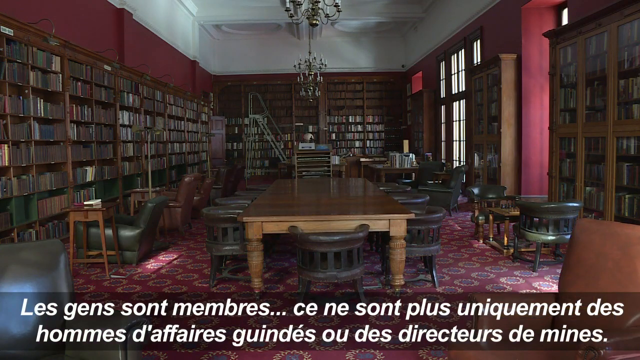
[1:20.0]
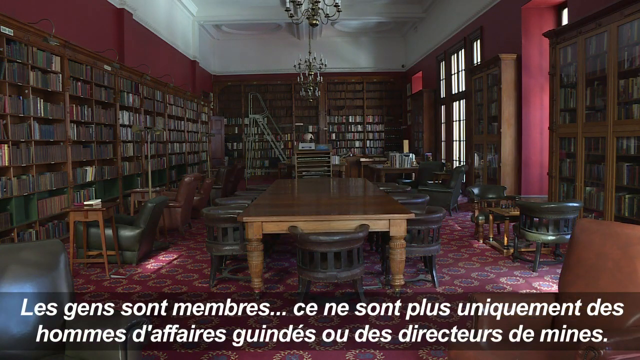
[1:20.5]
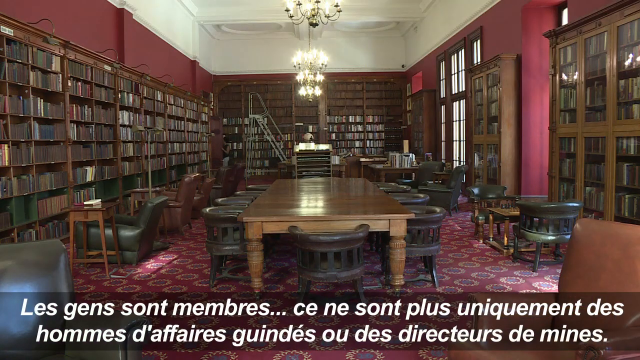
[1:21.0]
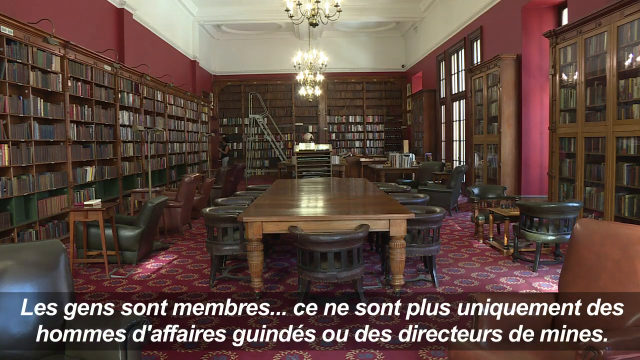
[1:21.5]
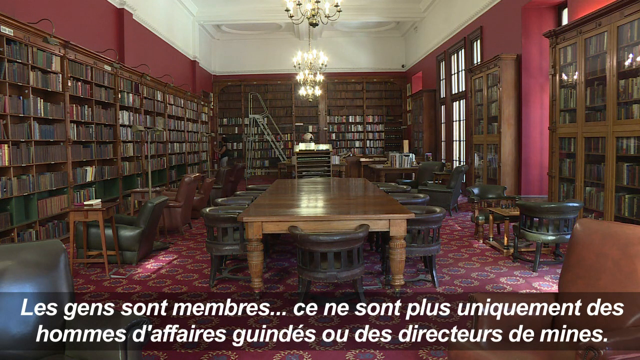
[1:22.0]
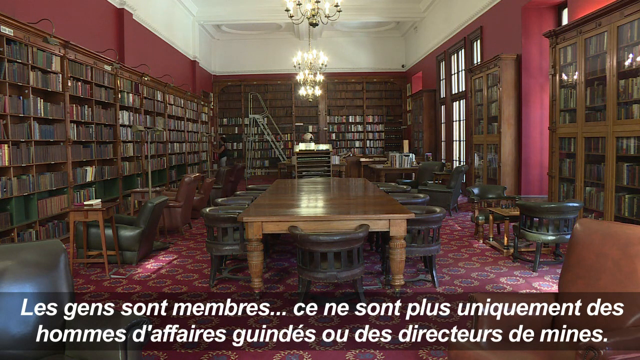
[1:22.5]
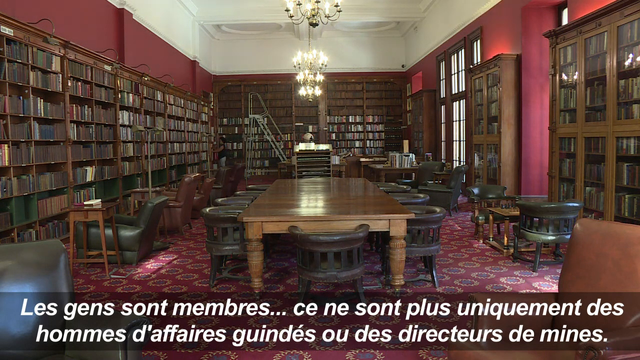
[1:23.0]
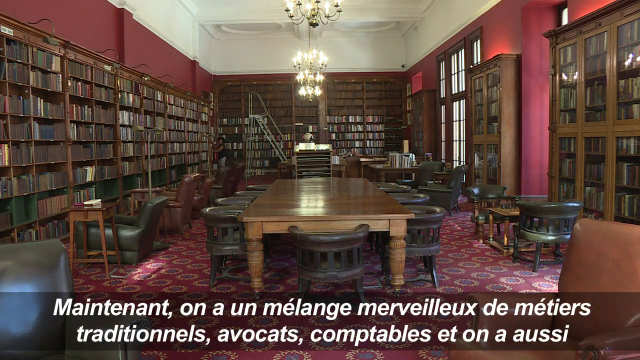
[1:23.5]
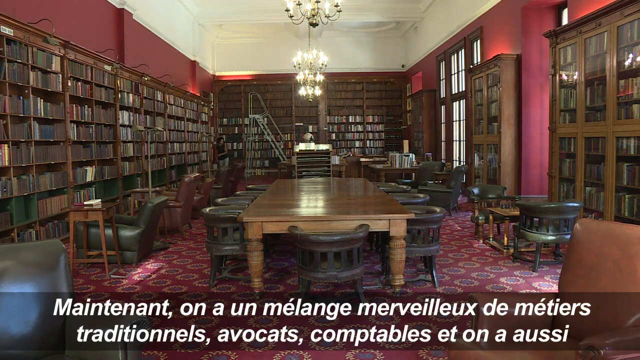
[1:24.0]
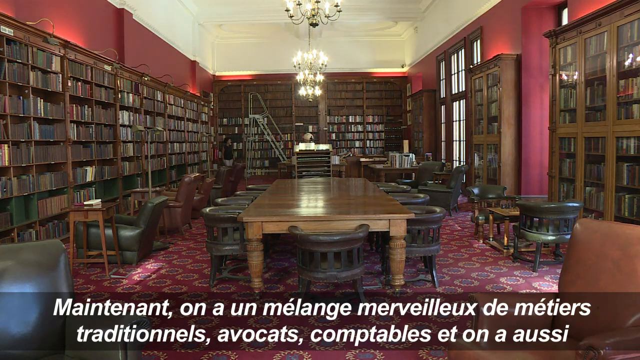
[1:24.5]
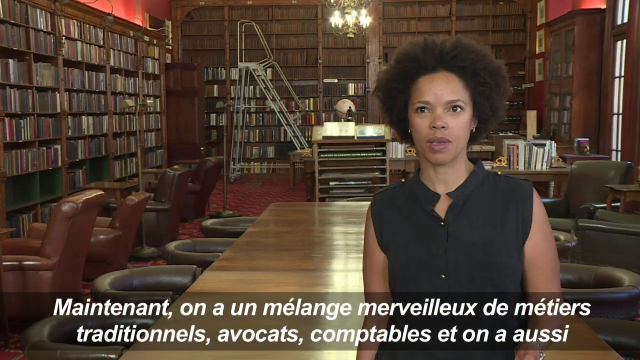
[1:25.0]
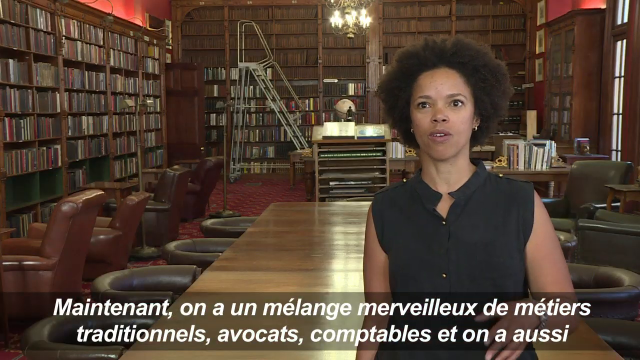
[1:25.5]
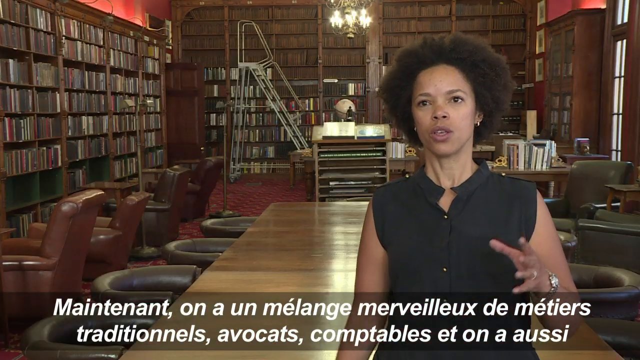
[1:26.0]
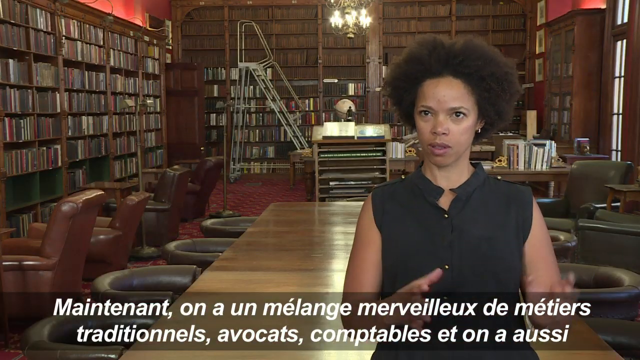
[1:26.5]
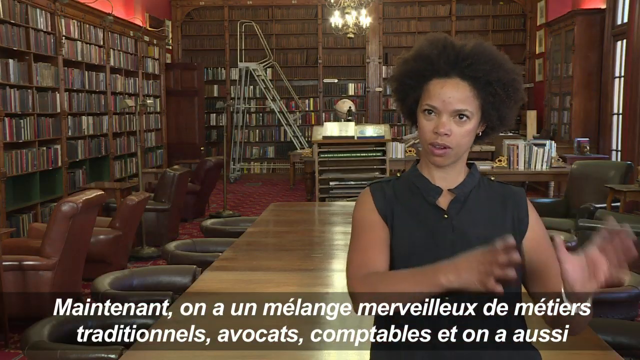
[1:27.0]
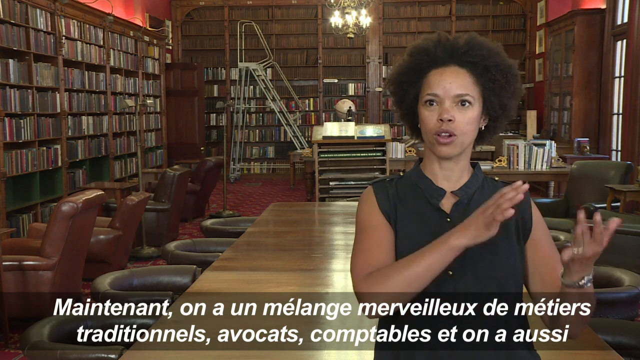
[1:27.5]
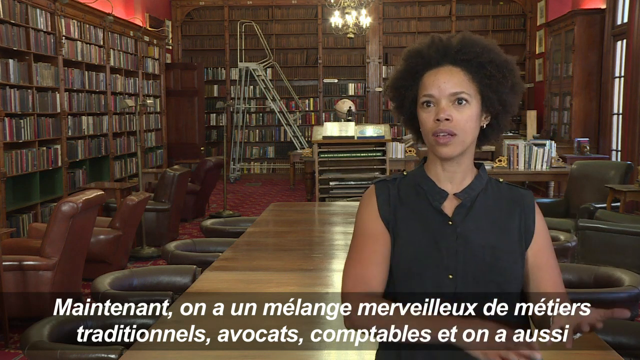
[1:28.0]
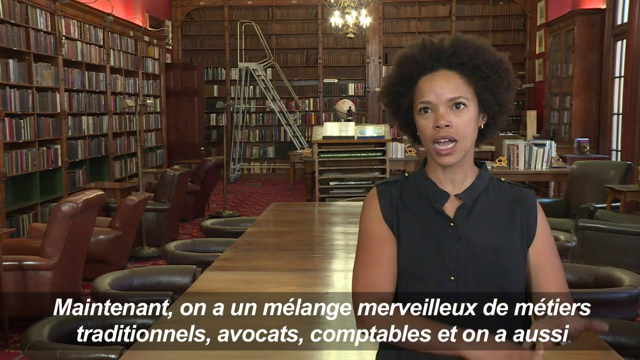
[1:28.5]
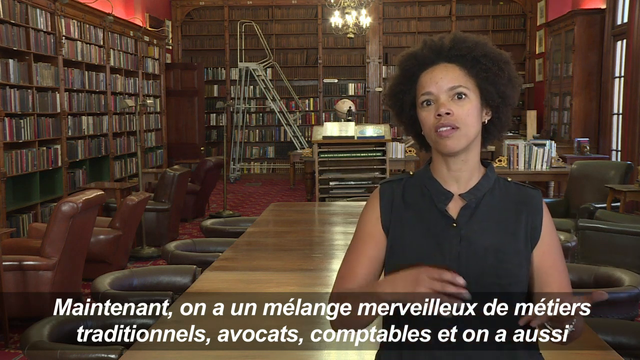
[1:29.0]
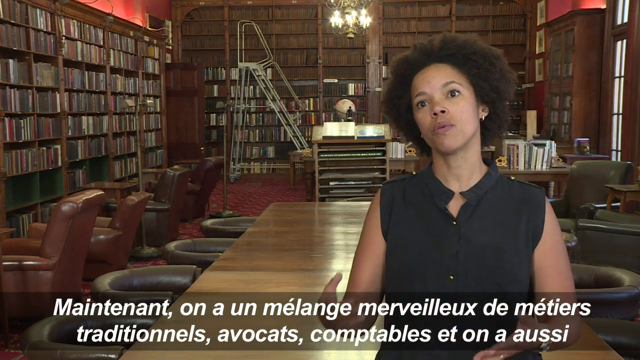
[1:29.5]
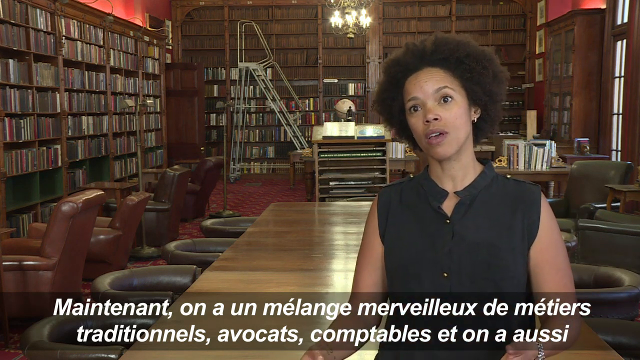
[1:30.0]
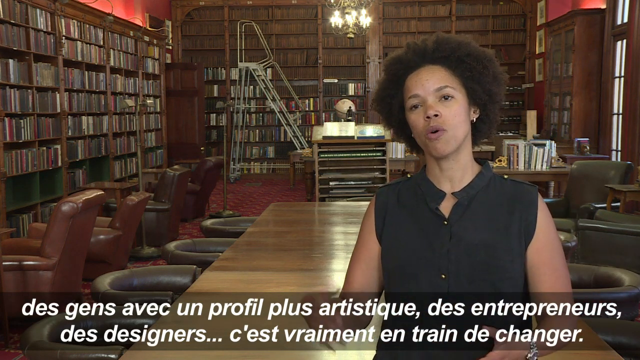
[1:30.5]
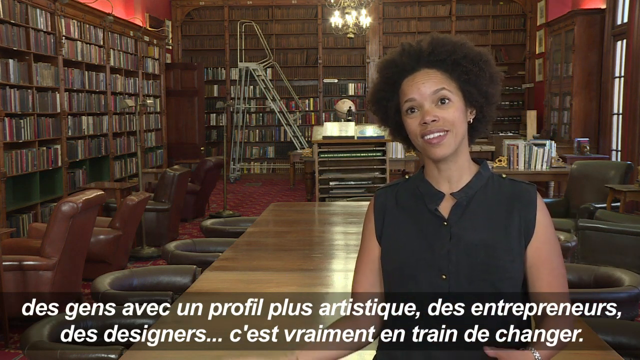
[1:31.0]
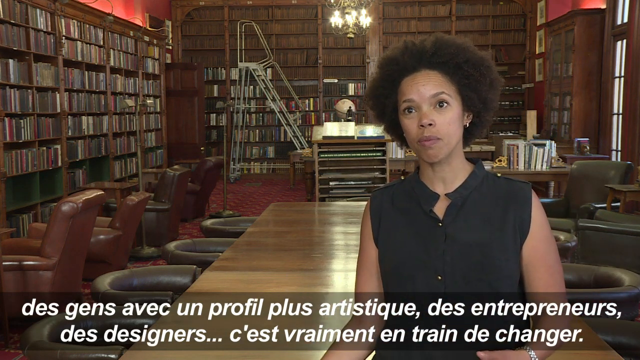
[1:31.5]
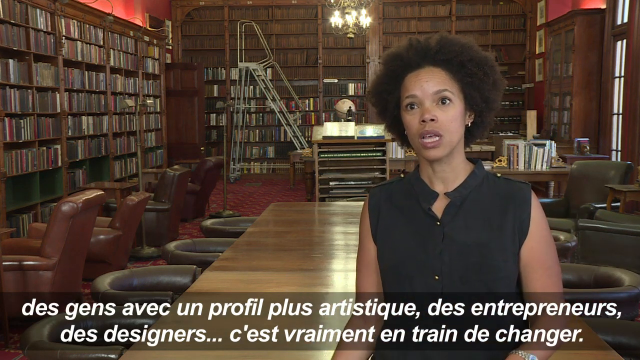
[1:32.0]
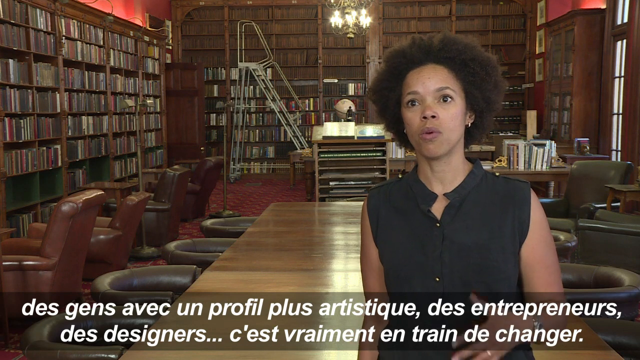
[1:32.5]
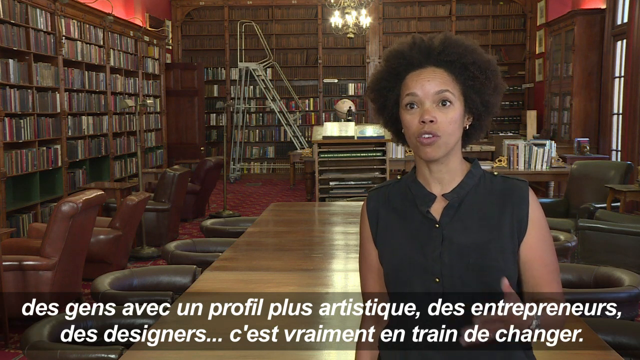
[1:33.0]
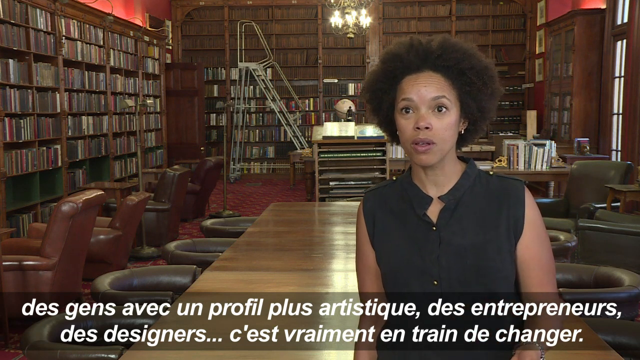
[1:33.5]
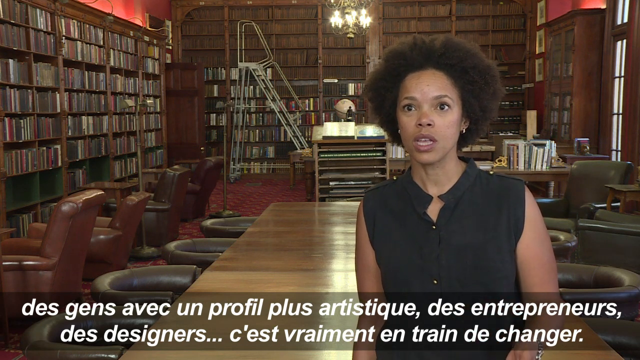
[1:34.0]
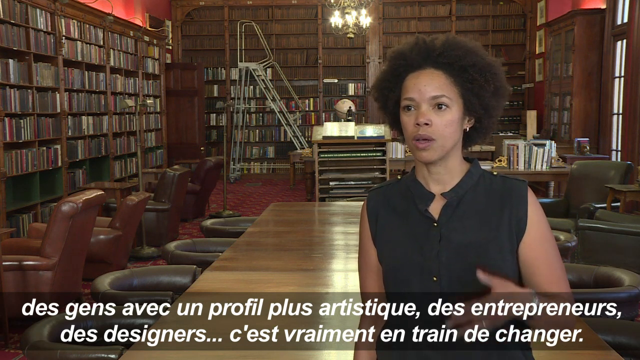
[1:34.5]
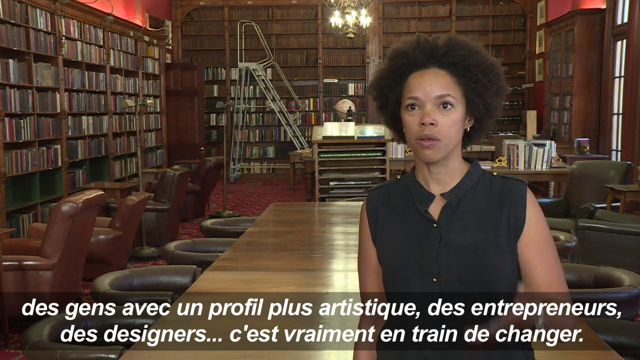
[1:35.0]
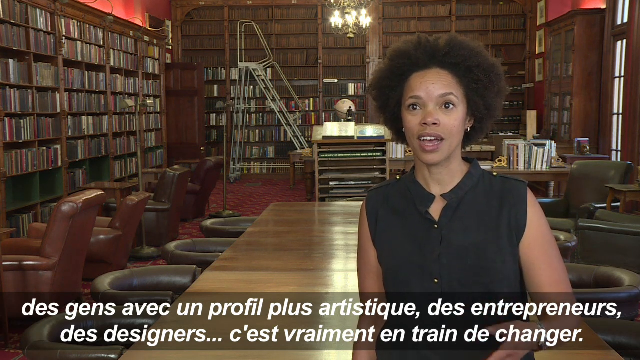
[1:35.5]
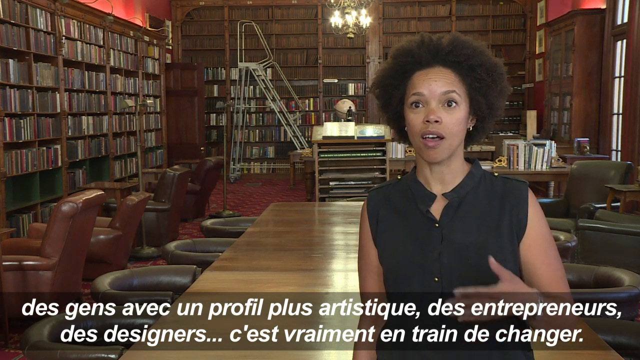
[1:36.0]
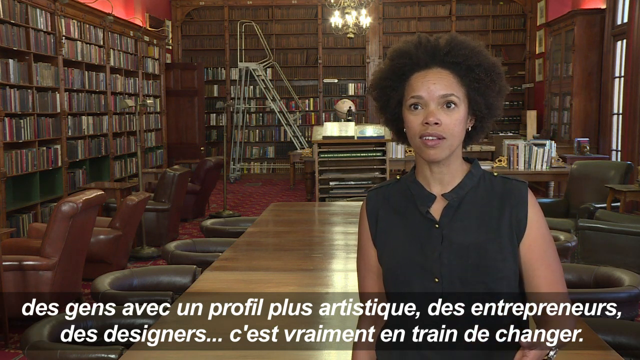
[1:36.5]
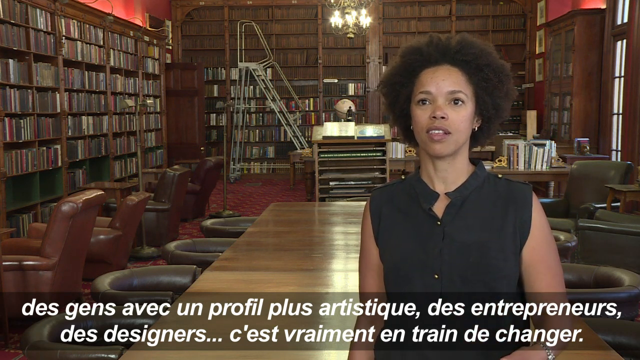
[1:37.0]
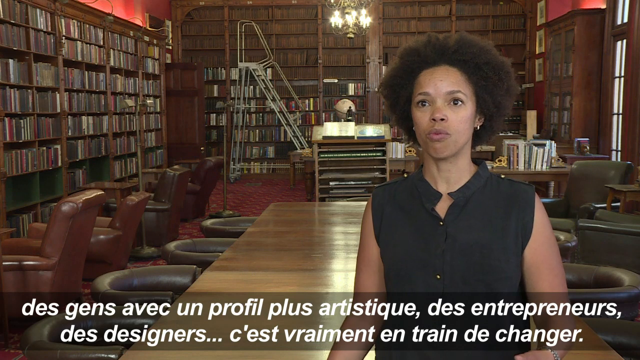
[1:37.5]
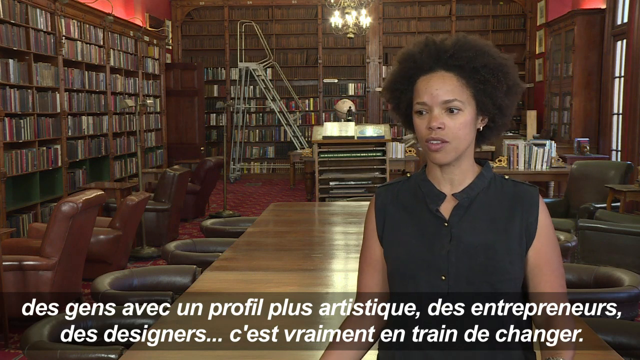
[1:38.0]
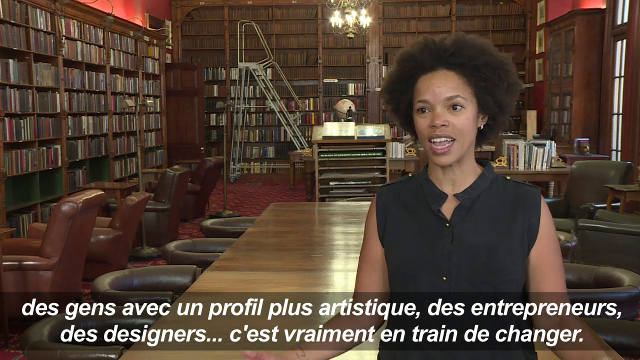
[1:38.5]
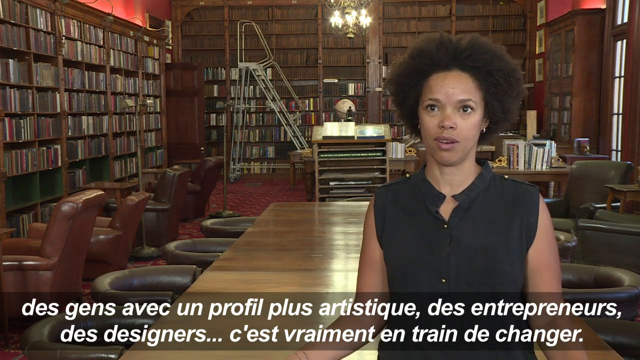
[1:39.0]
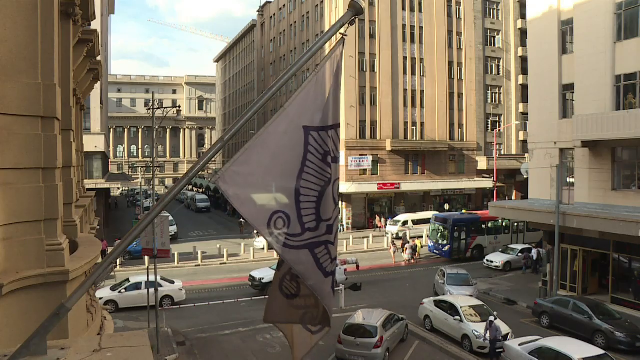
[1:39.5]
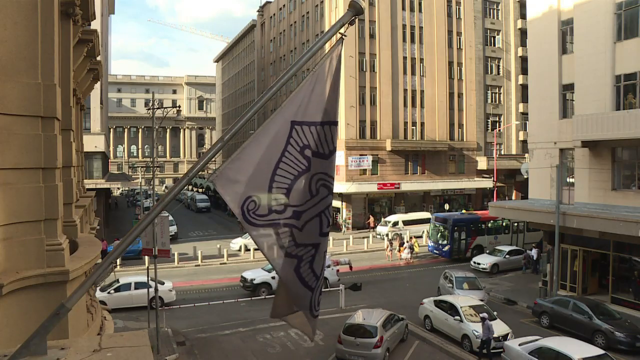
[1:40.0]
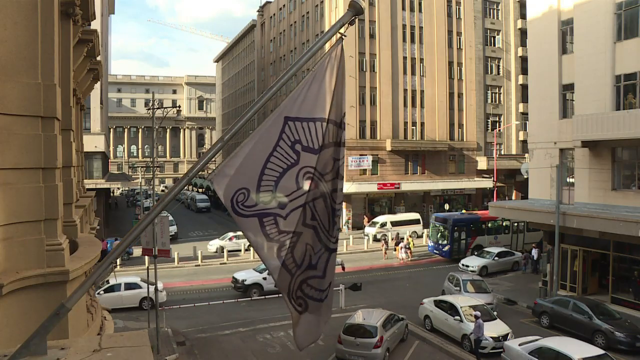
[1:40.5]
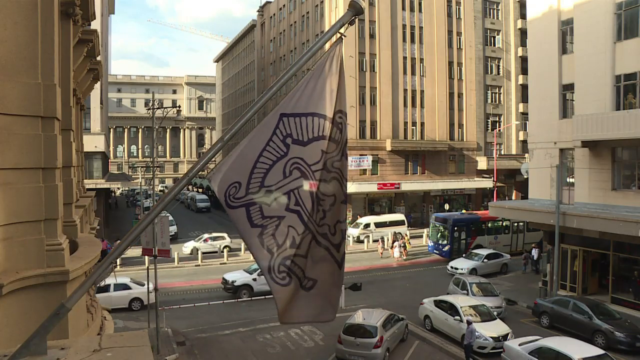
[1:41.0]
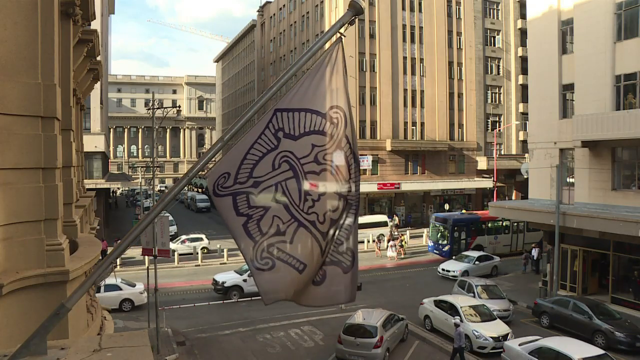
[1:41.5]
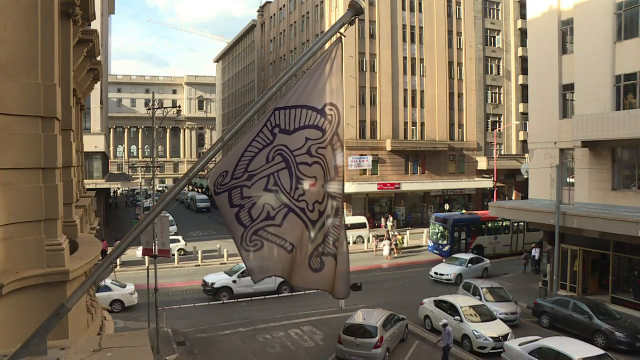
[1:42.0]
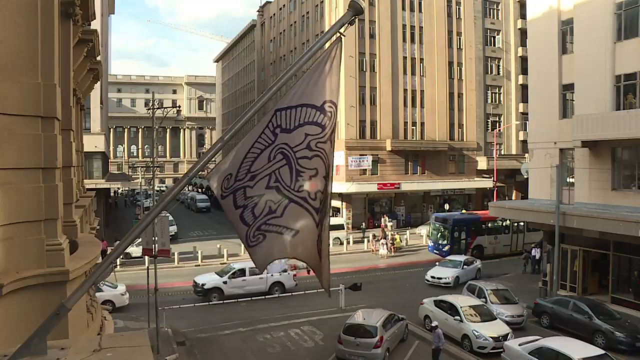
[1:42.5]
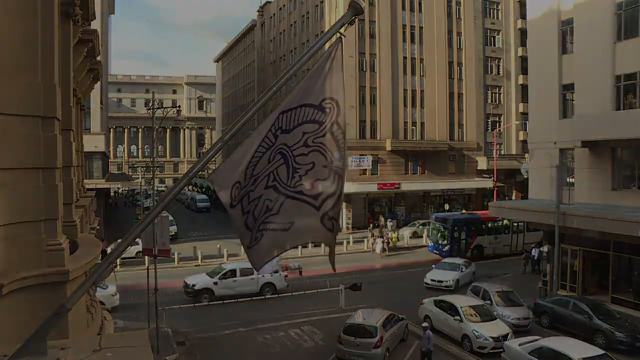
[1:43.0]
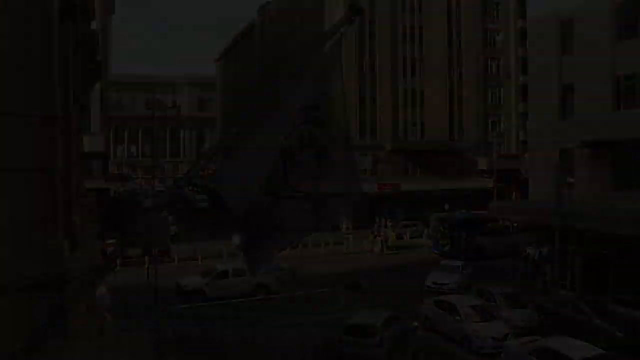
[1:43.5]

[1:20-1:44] A woman seen earlier is in the library, talking to somebody off camera and gesturing with her hands as she speaks, both hands going from left to right, fully extended with palms showing. She has a watch or bracelet on her left hand, and her eyes are kind of wide as she speaks. When the lights come on, the library brightens, showing a silver ladder in the back, leather chairs on the left and leather chairs around the table. Then the video goes outside and shows four buildings. On the left-hand building a flag is in the forefront, on a silver flagpole mounted on the building; the flag is white with some sort of blue emblem. Cars in the street go from right to left, and all of them are white. There is also a bus on the street, white with red on top and blue on the front, and one van in the traffic.